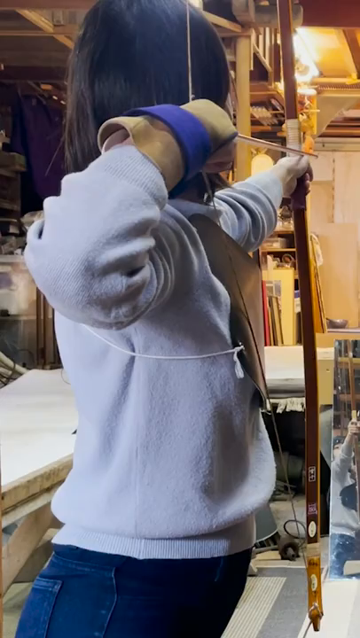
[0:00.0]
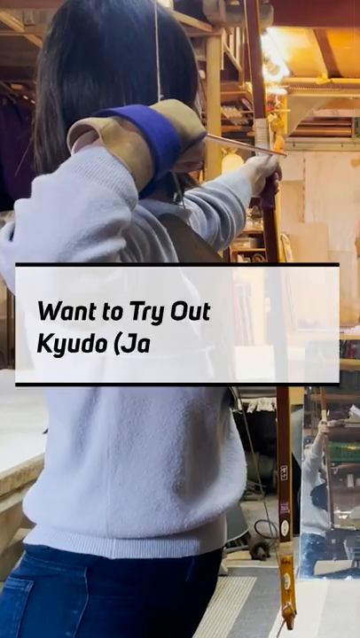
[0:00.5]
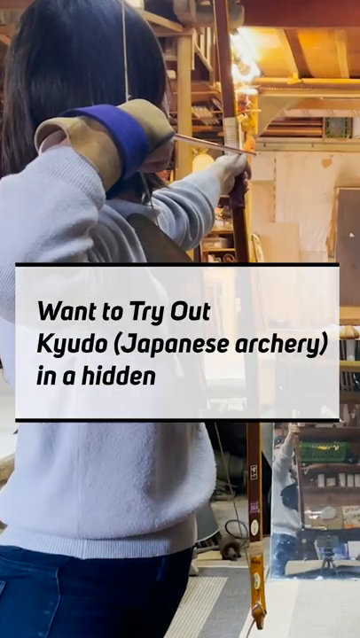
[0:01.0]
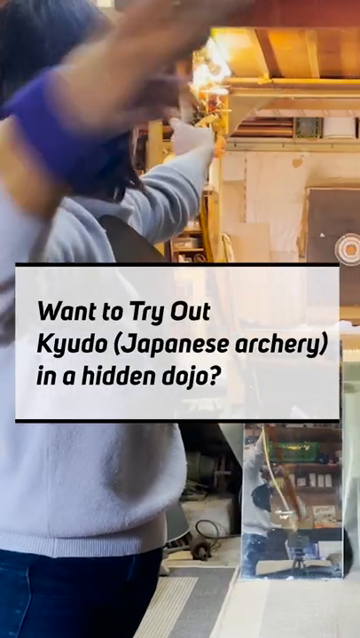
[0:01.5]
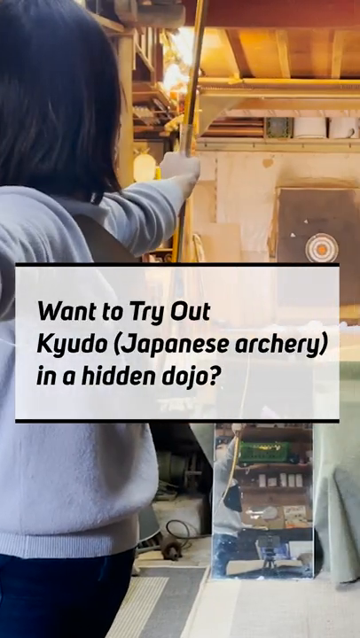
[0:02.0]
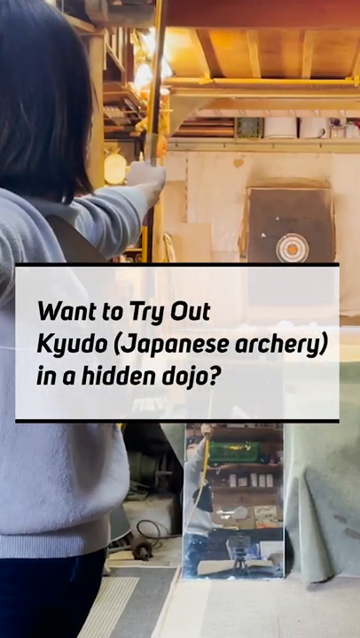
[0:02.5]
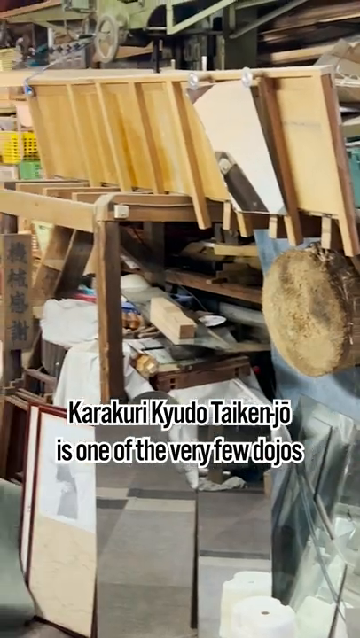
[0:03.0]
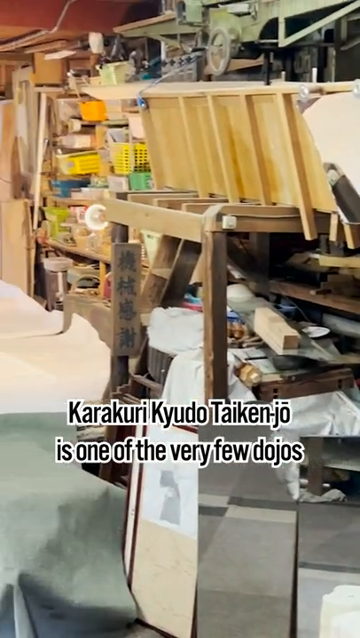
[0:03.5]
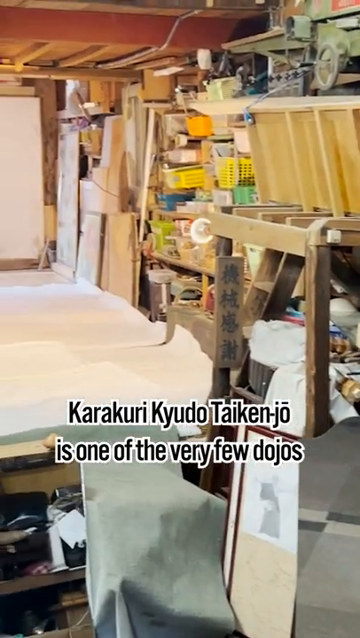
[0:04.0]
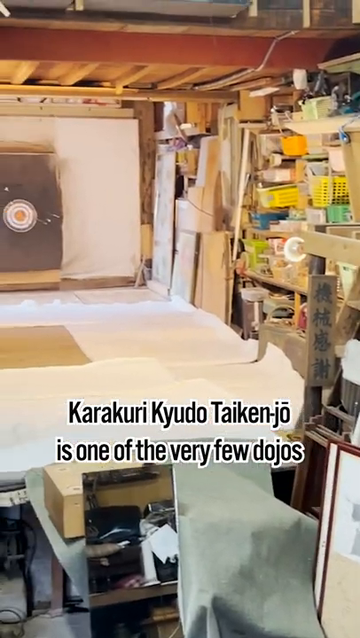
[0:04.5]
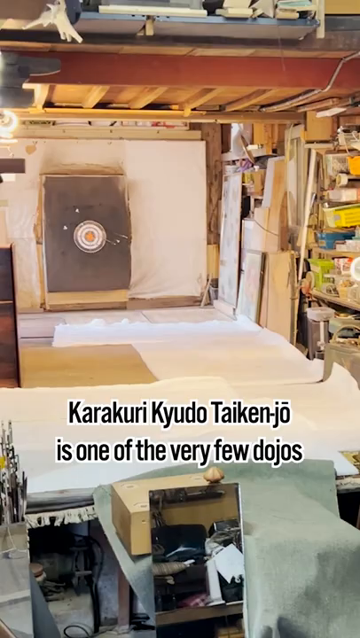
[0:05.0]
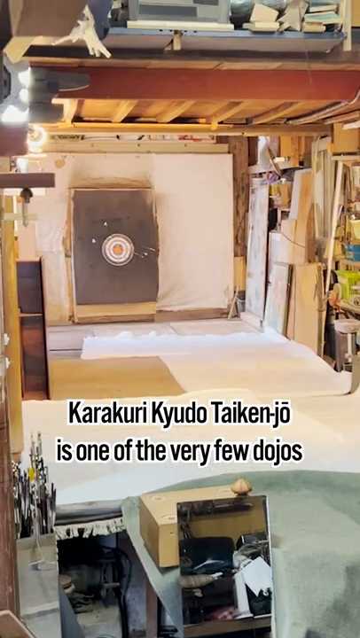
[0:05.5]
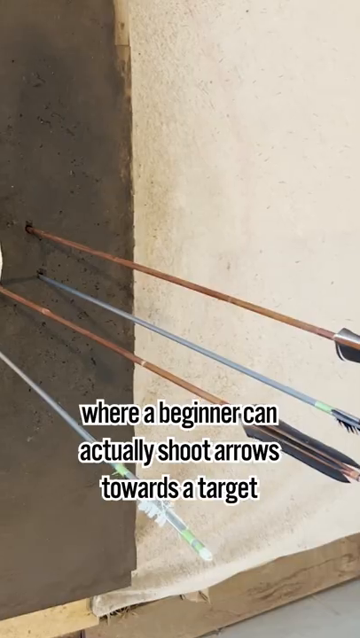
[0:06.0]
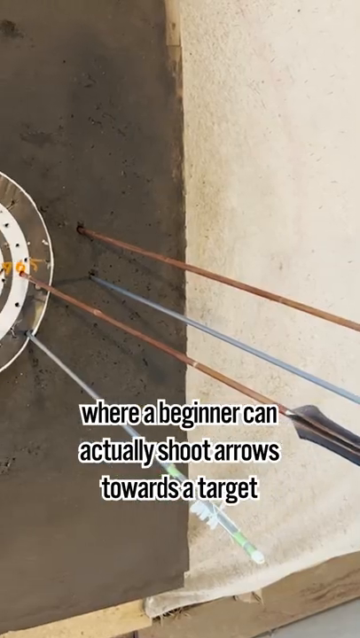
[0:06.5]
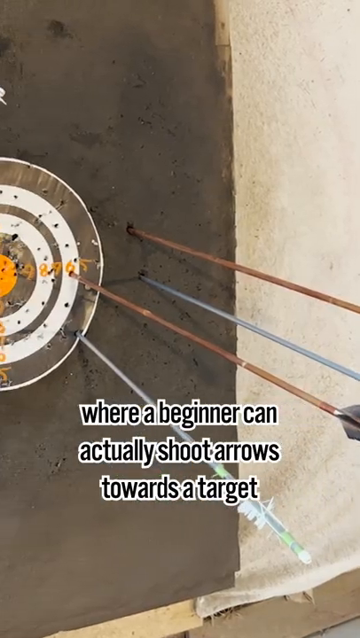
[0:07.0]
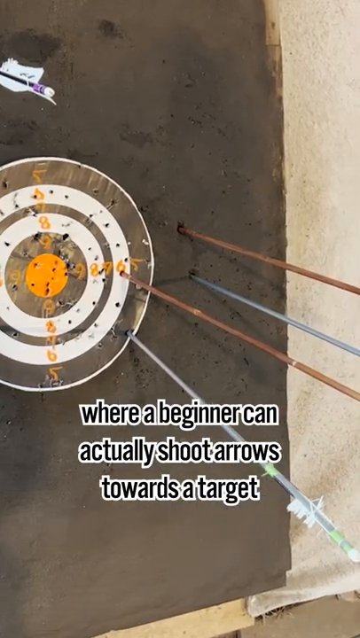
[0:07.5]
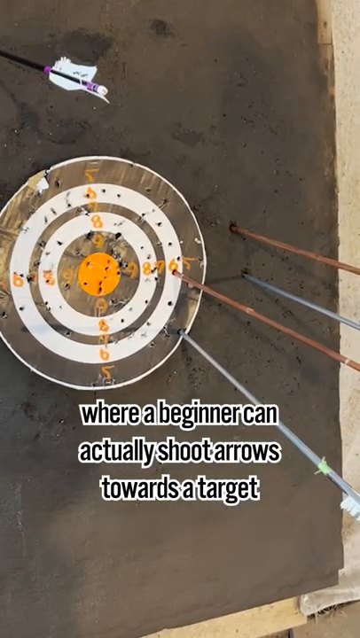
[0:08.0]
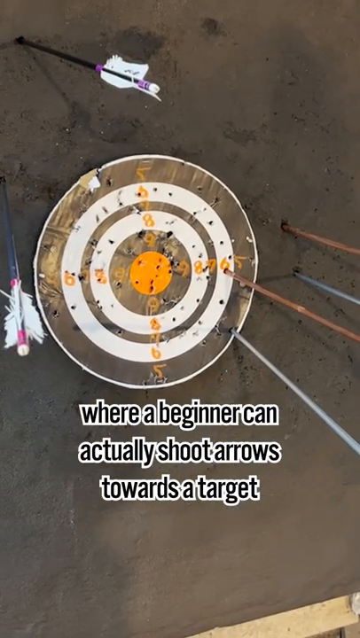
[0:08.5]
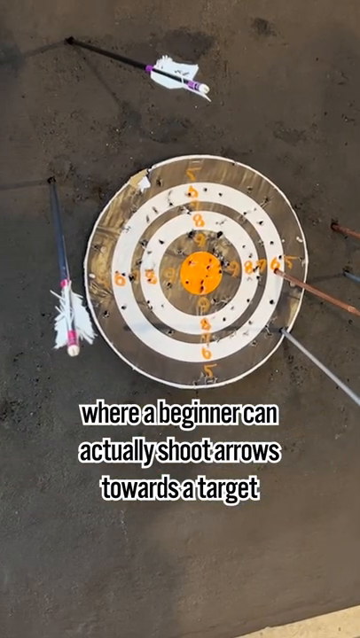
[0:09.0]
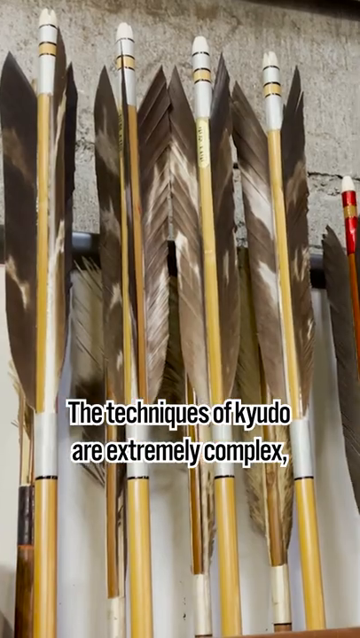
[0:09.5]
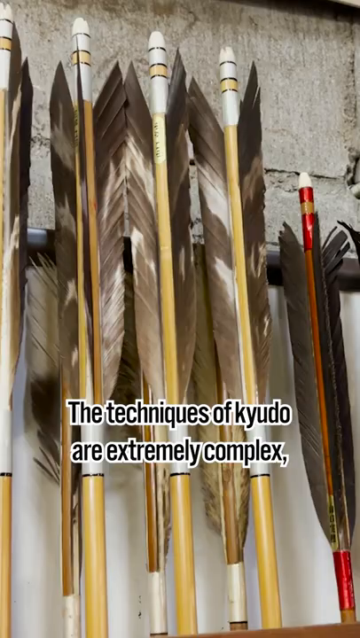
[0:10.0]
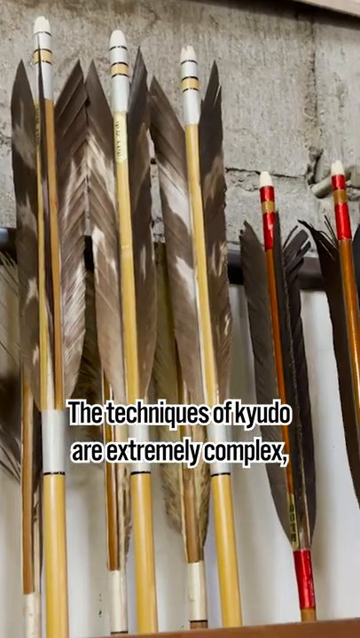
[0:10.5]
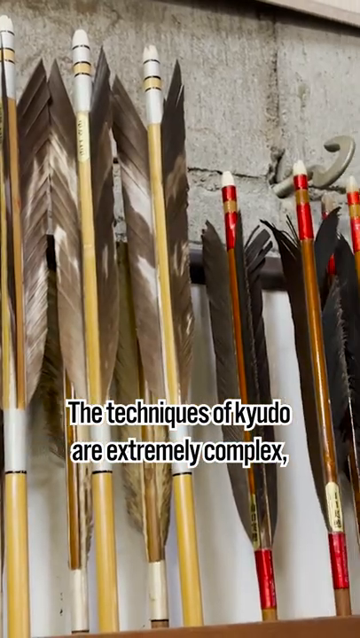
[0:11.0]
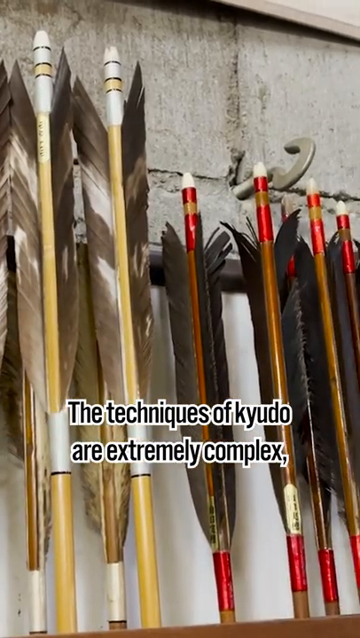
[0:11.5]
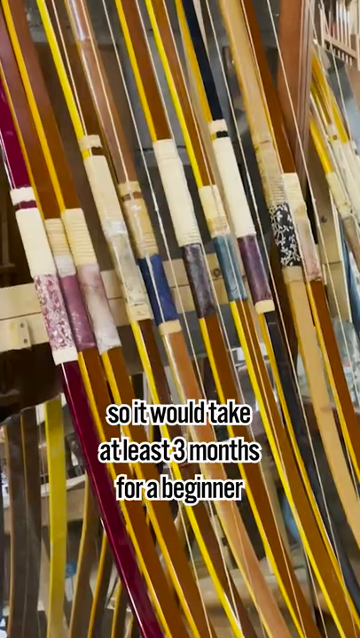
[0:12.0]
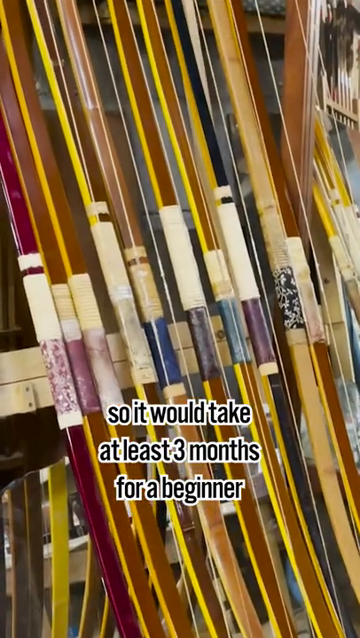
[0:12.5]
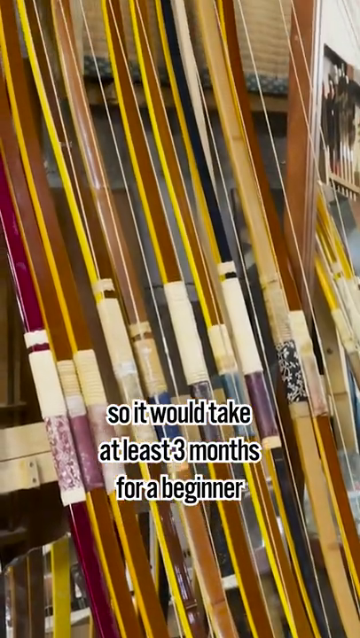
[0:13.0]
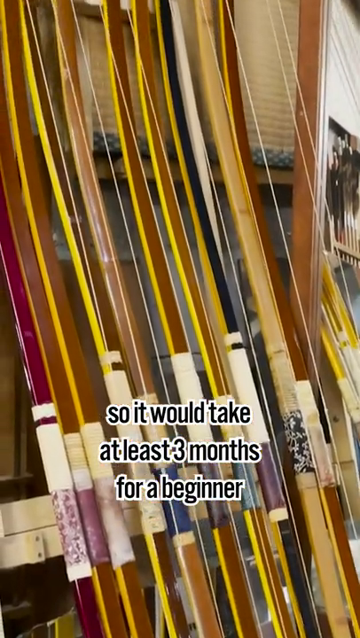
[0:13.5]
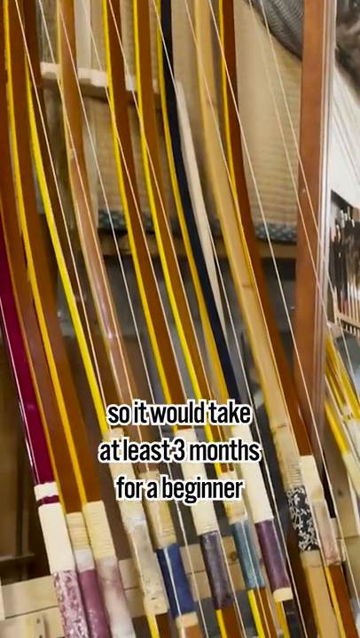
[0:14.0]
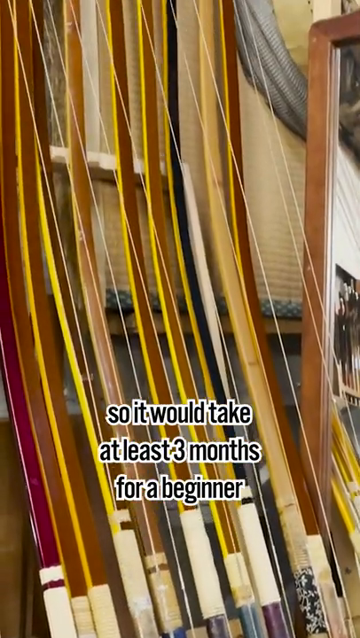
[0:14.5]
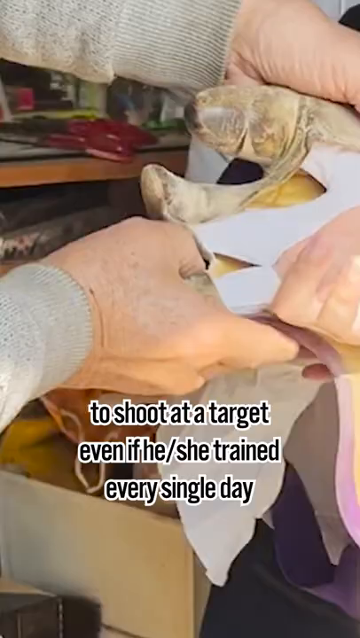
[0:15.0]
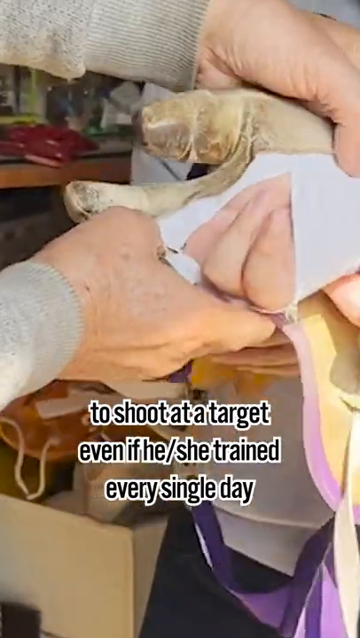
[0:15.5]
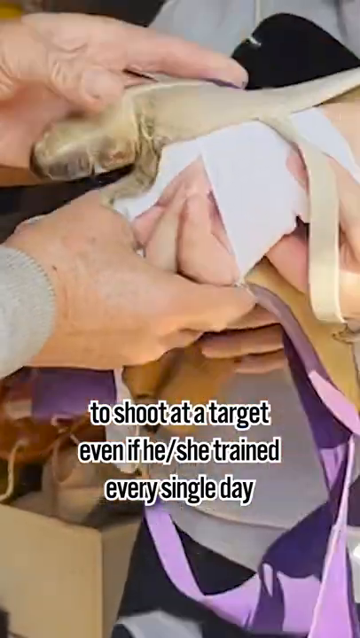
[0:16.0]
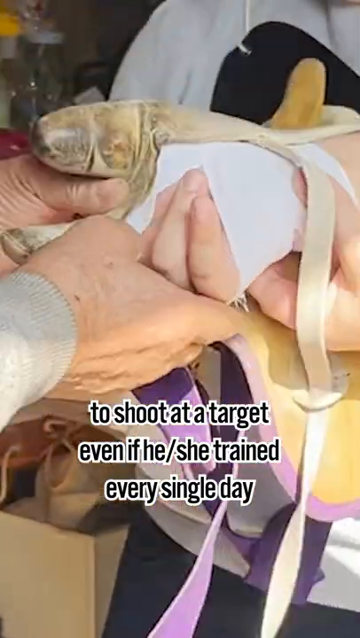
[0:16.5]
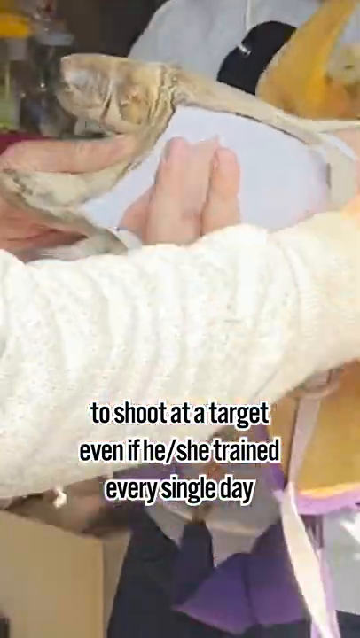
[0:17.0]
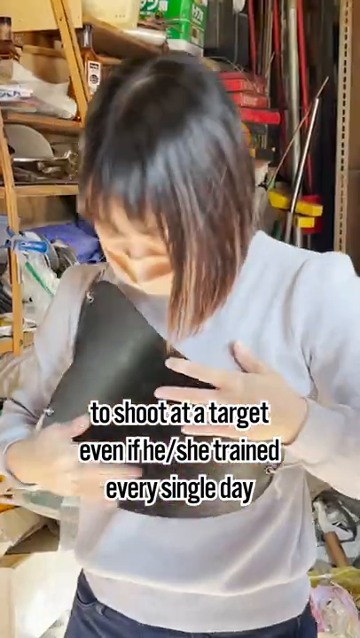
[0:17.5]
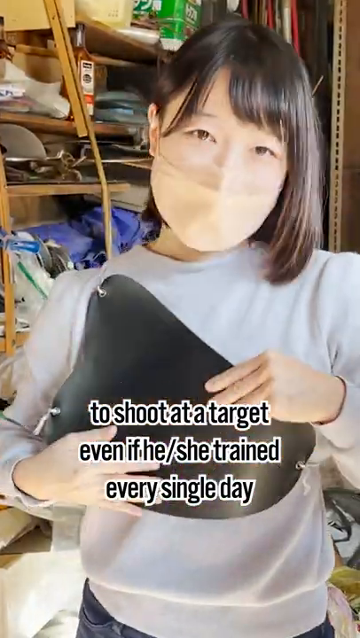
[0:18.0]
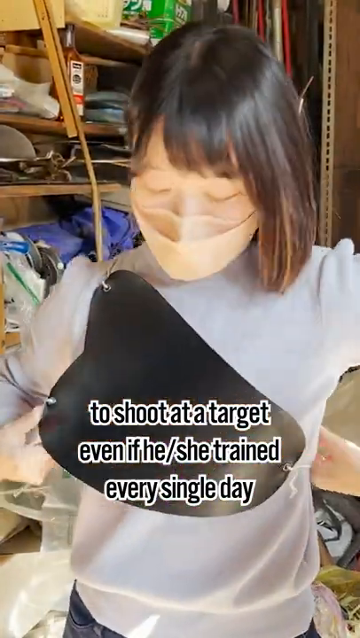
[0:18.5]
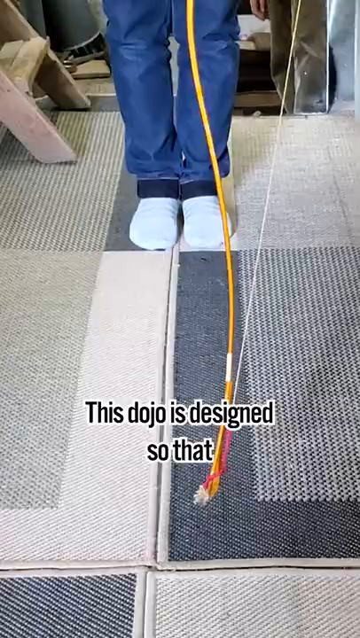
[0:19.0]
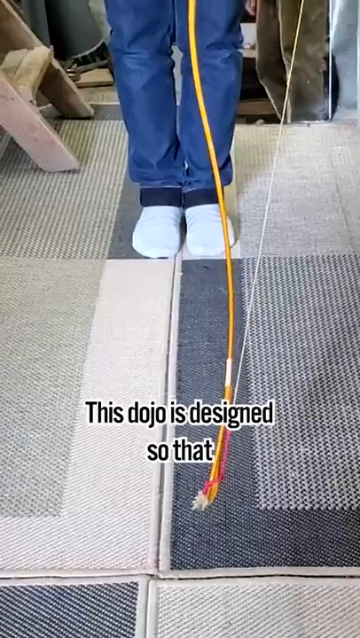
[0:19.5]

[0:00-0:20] On-screen text reads "want to try out kyudo Japanese archery in a hidden dojo," and a person with a bow and arrow appears. There is a target that was mostly missed, with various arrows around it. Text says "the technique of kyudo are extremely complex," and further text ends "to shoot at a target even if he or she trained every single day." Different types of arrows are shown. The person wears some type of protective gear around the chest. A woman holds a bow and arrow and aims at the target, her left hand in front and her right hand drawing the string back, apparently in some type of Japanese archery technique. She is in a room, aiming at a target.